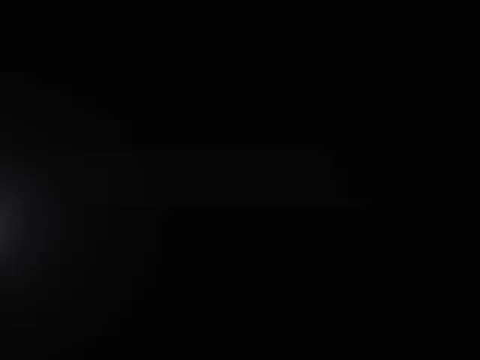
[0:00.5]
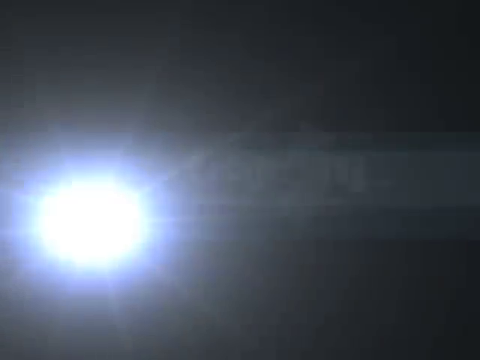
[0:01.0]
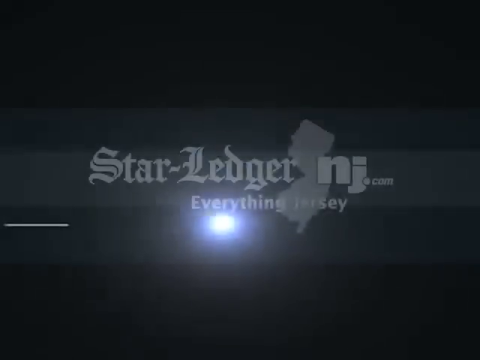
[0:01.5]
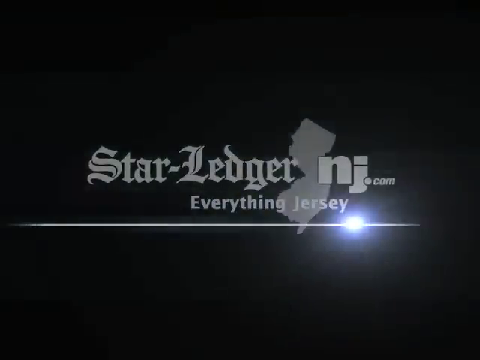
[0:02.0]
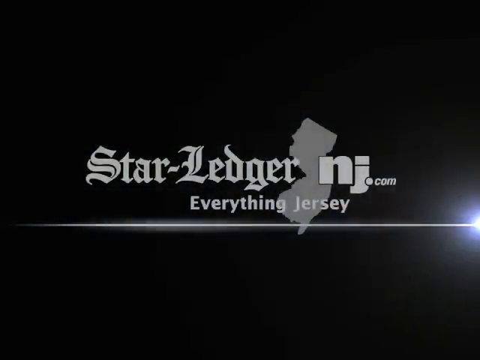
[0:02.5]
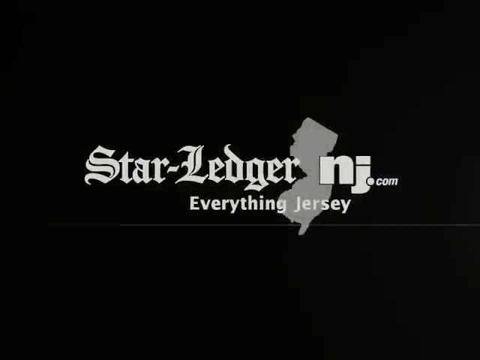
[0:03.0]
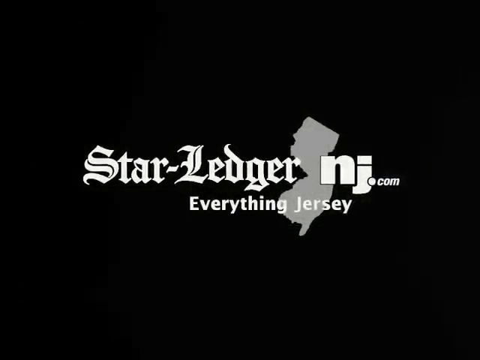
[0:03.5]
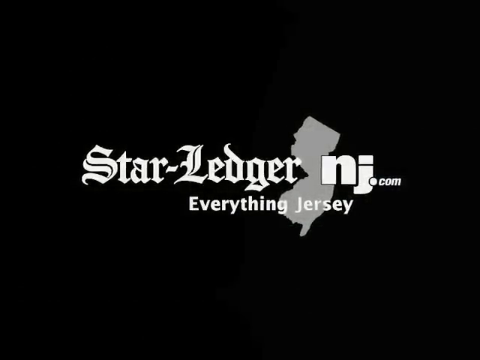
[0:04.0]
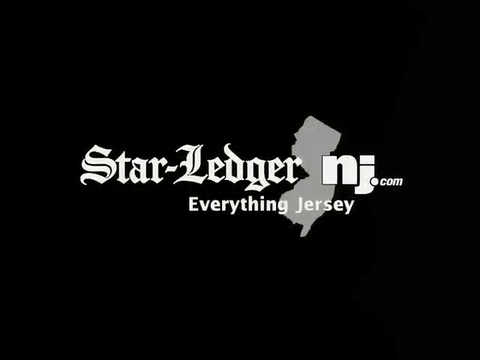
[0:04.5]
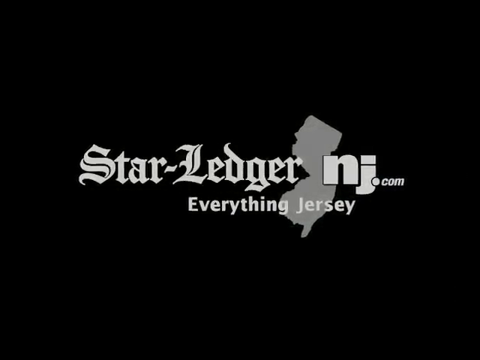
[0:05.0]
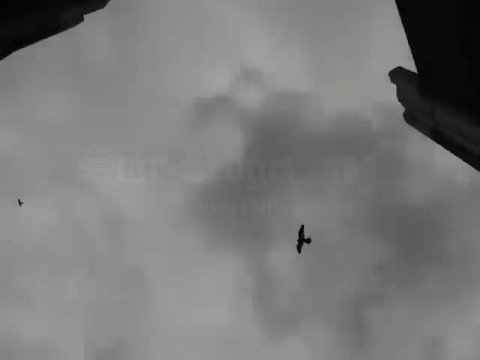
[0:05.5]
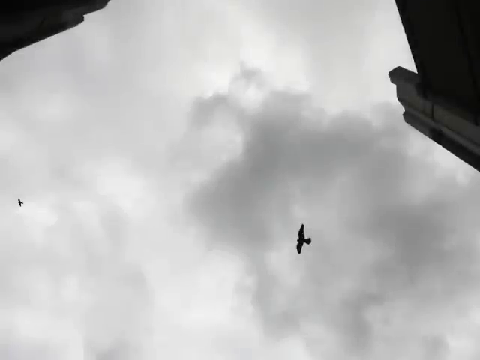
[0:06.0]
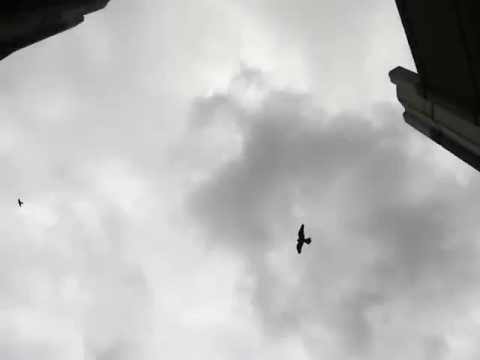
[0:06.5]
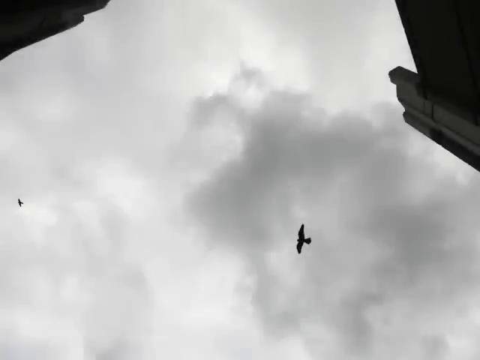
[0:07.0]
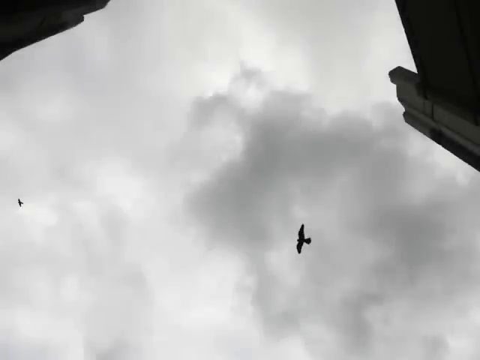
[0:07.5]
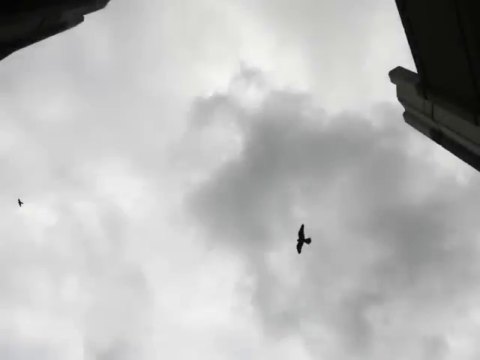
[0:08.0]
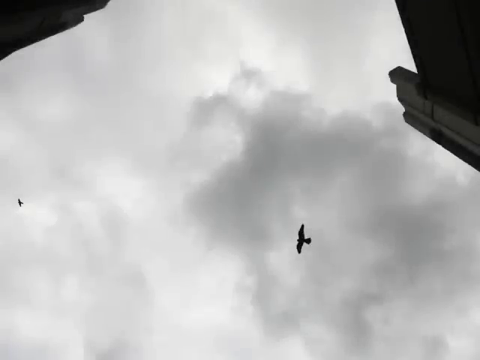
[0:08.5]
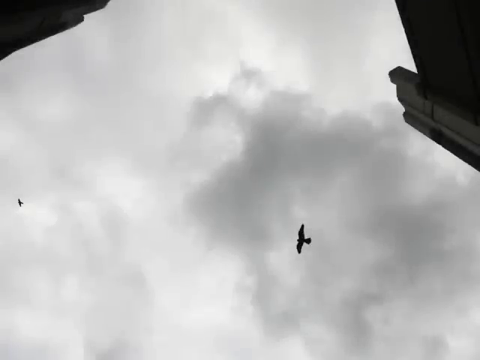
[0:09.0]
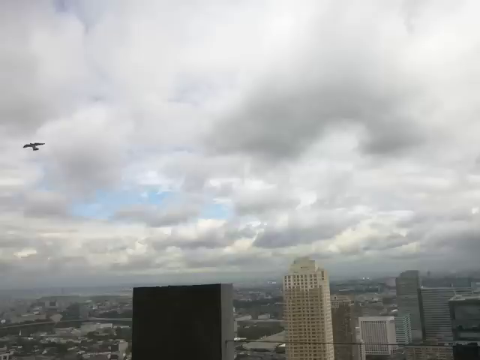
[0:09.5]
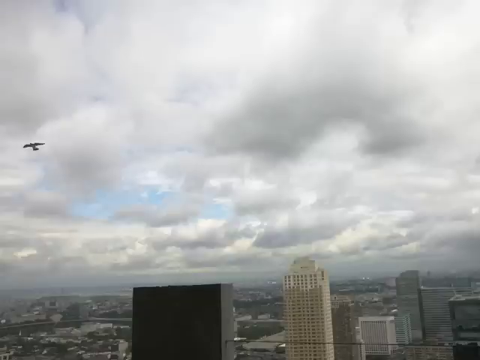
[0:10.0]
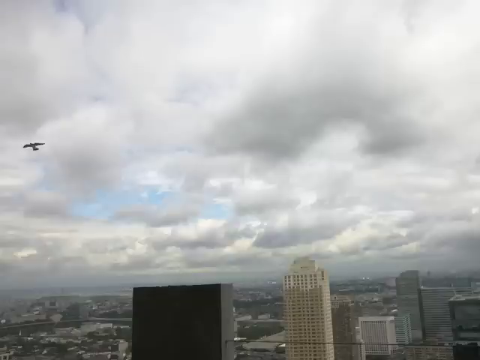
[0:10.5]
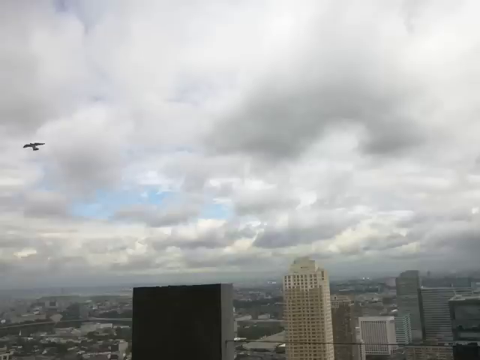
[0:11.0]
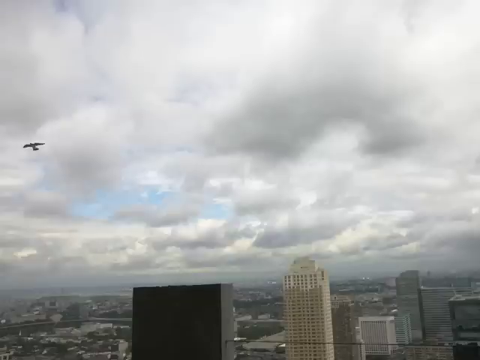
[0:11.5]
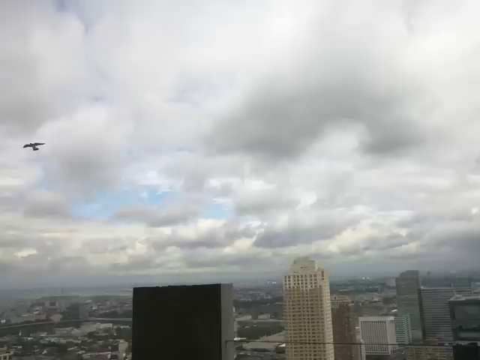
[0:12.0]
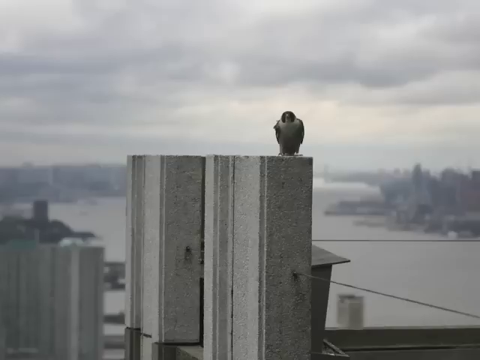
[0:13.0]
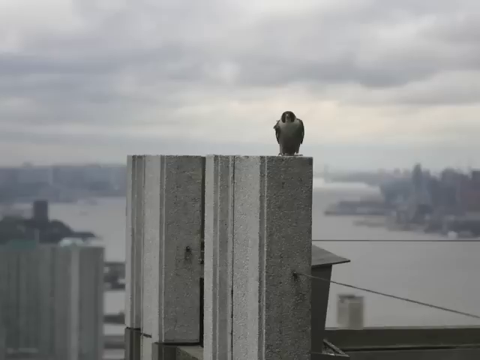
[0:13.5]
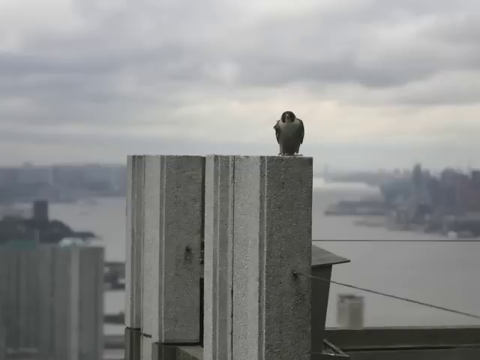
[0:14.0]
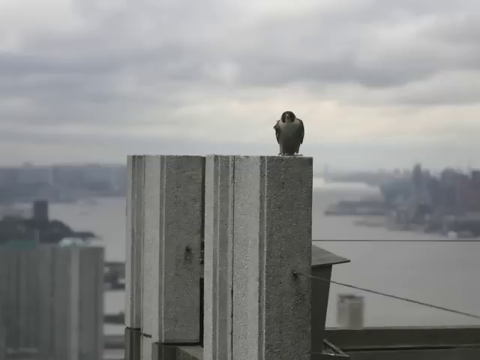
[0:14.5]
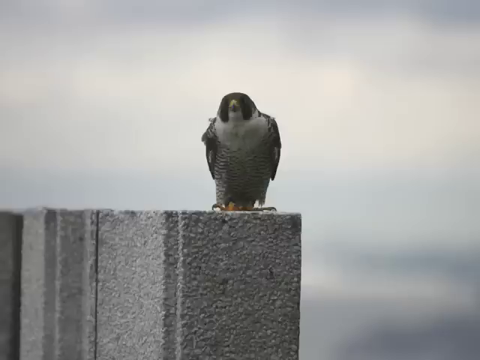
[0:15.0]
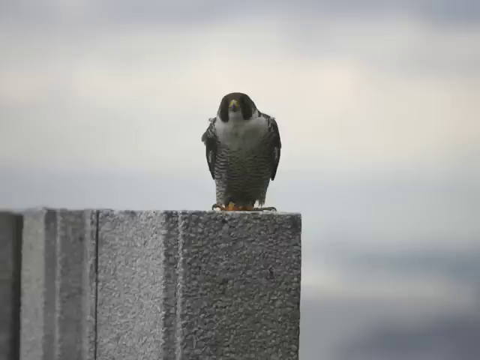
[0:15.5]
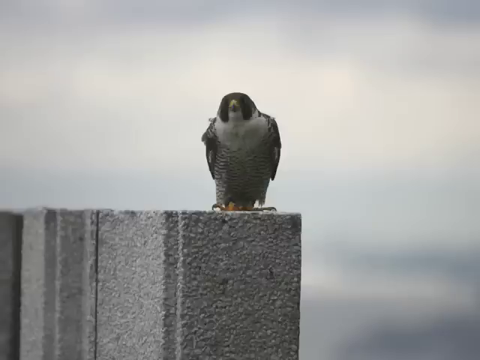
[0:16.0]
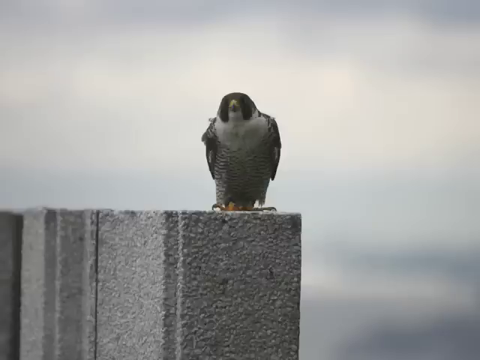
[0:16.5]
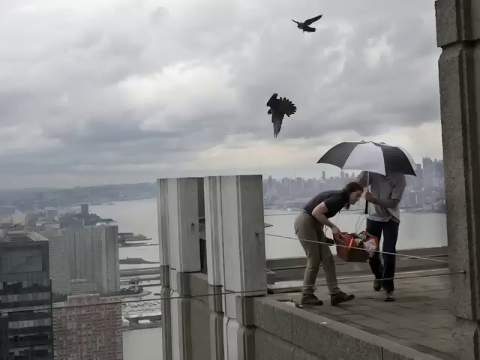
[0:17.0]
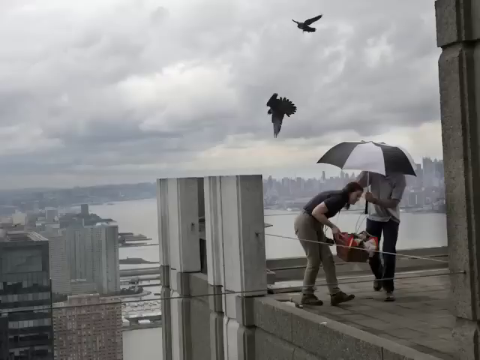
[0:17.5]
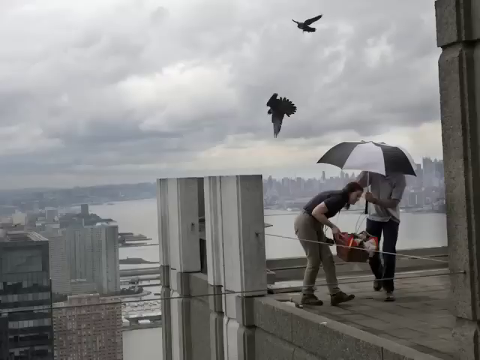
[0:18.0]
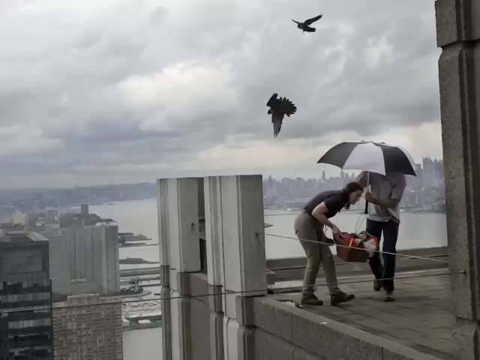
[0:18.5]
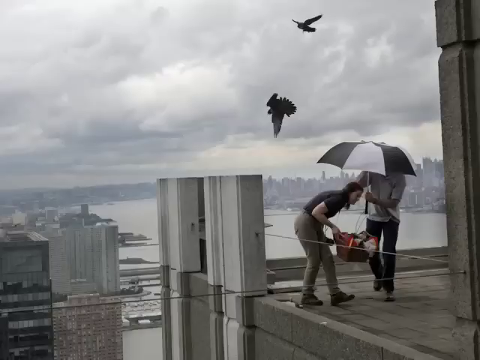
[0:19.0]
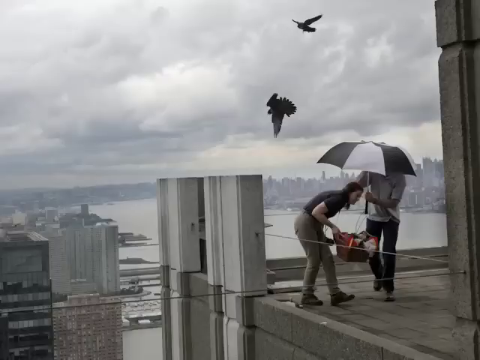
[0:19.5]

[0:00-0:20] A title appears on a black background reading "Star Ledger, nj.com, everything Jersey" in a font that looks almost like old English, along with what looks almost like an outline, possibly of Jersey. The image slowly zooms in, and then a photograph shows two birds flying in the sky, taken from an angle that looks as if the photographer is on one knee pointing directly up. A couple of buildings are visible in the top left and top right corners, and the day is very gray and cloudy. Another image shows what looks almost like a city skyline in the daytime, with blue sky but heavy cloud, and a bird, or some kind of falcon, in the mid-left of the frame. The next image shows what again looks like a falcon perched on top of a couple of what look like breeze blocks, apparently very high up, maybe at the top of a building. In the background are skyscrapers, apparently Jersey, under a very cloudy sky, and there seems to be a big river running through the back. A much closer photograph shows the bird standing on the concrete; its feet, yellow beak and feathers are visible, and the image has an almost bokeh-style, very blurred background. A shot then shows two people on top of the building: the man appears to be holding a black and white striped umbrella, and the woman hides underneath it as two of the birds come swooping down.